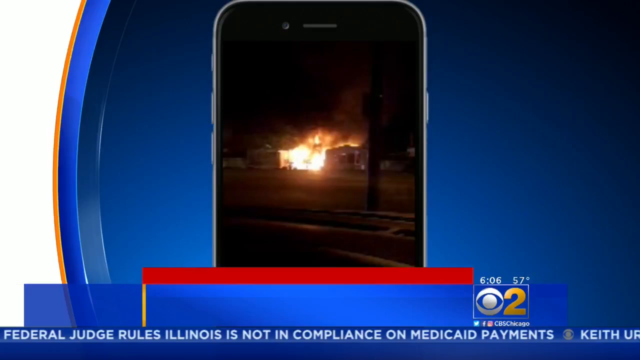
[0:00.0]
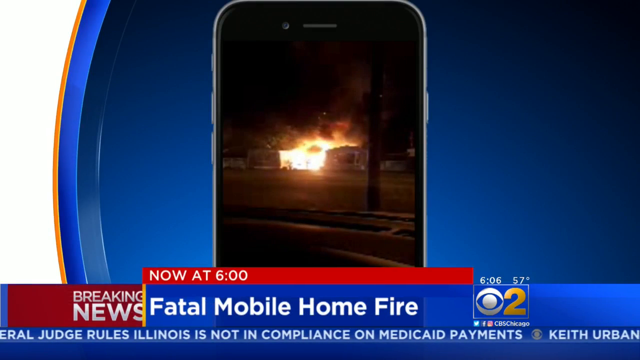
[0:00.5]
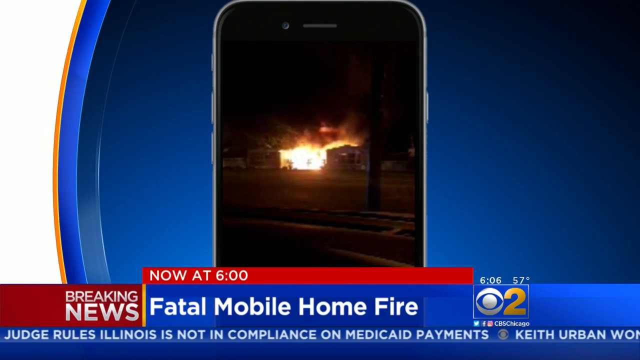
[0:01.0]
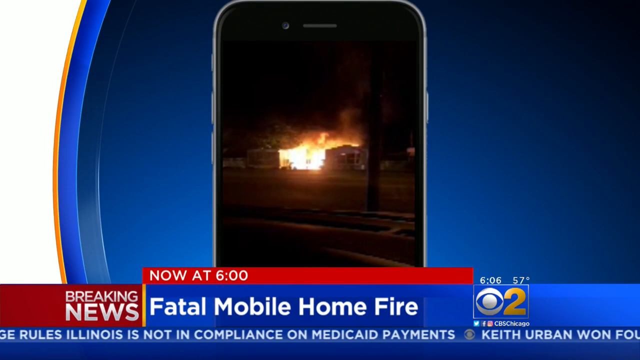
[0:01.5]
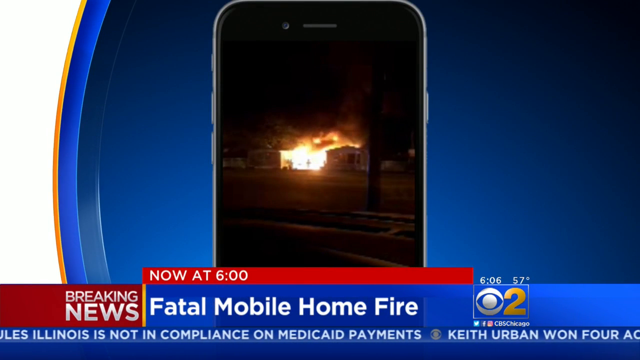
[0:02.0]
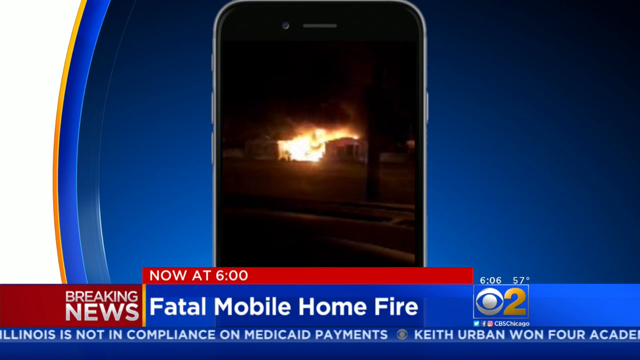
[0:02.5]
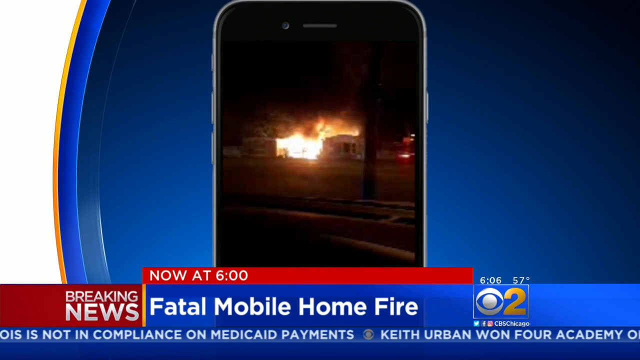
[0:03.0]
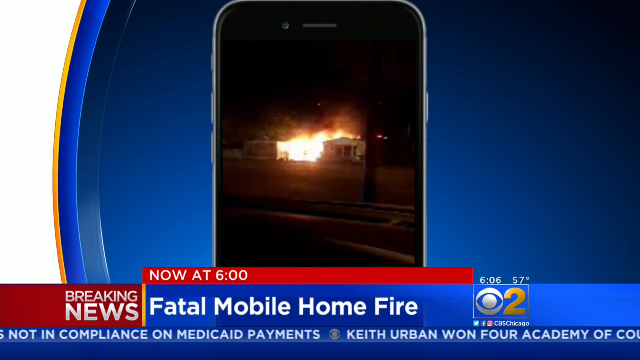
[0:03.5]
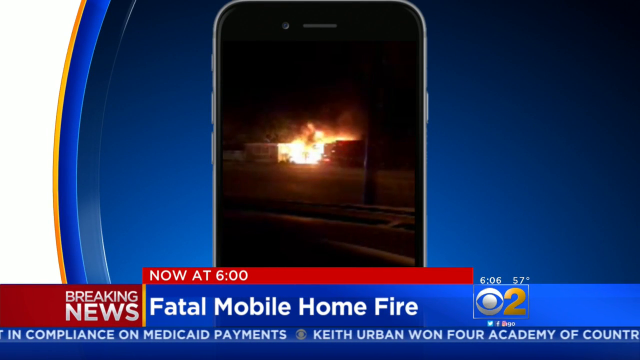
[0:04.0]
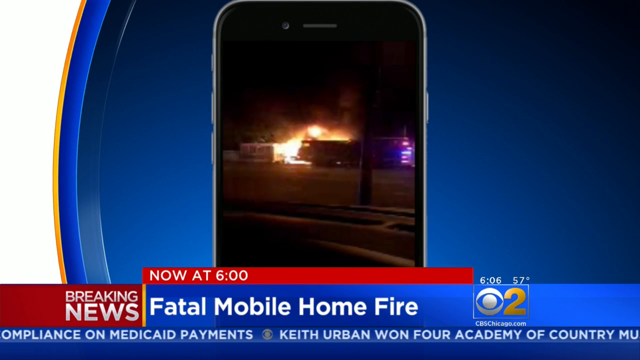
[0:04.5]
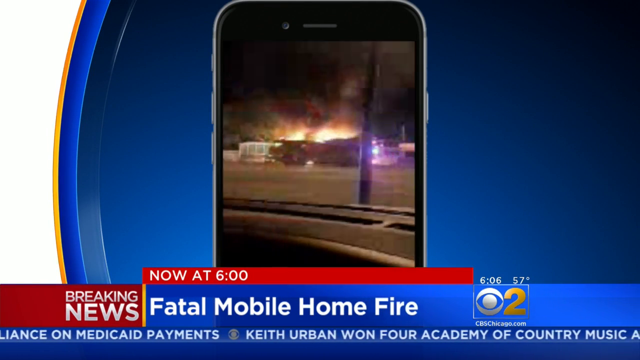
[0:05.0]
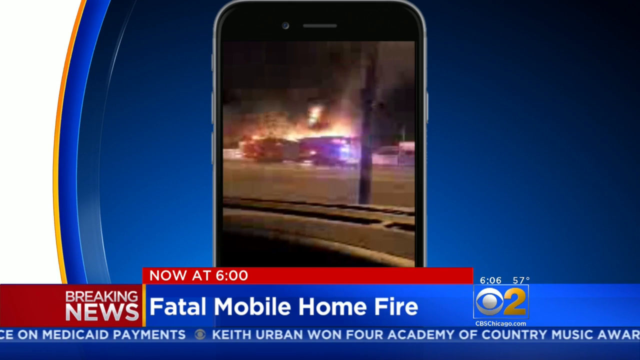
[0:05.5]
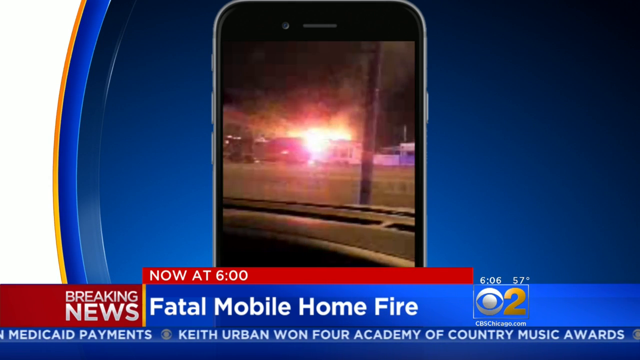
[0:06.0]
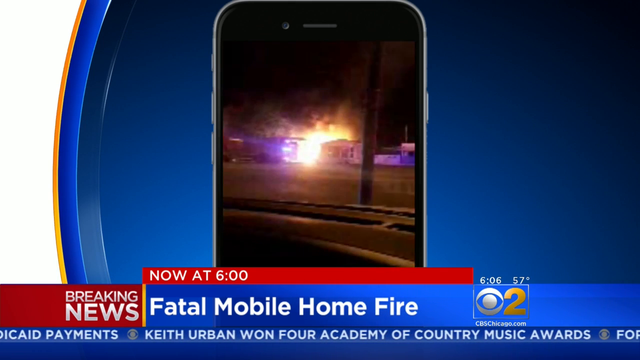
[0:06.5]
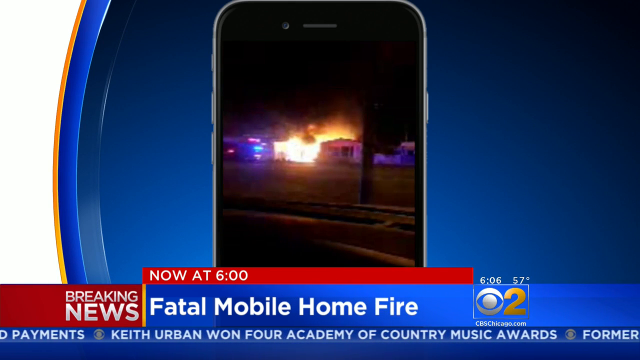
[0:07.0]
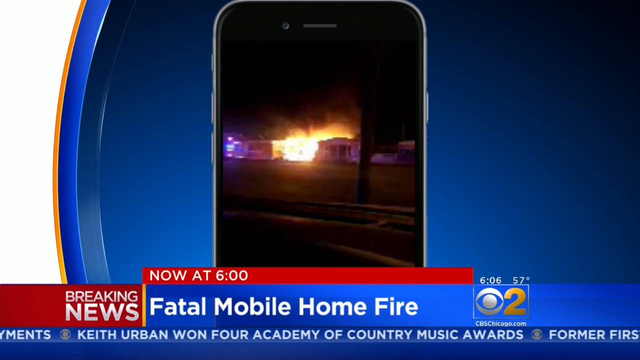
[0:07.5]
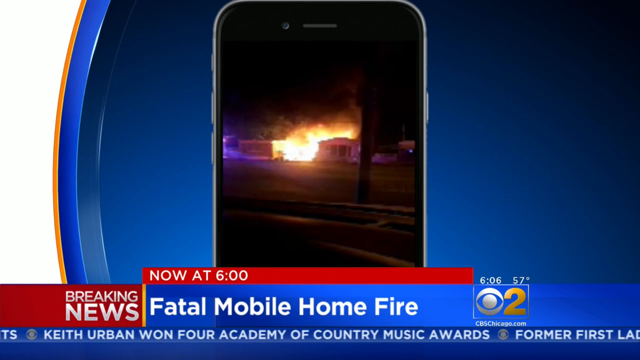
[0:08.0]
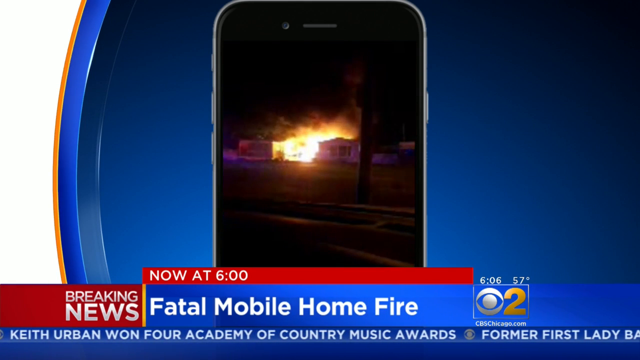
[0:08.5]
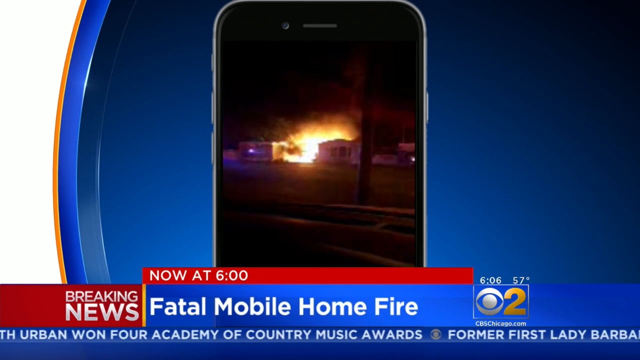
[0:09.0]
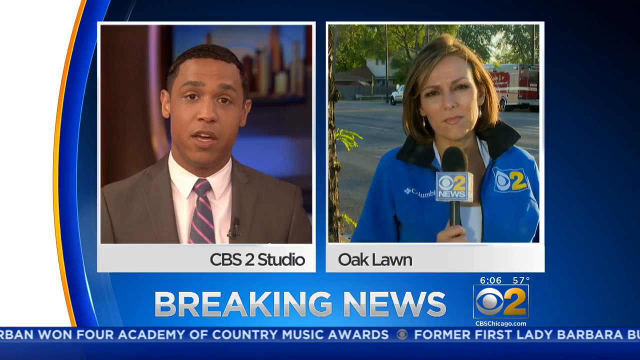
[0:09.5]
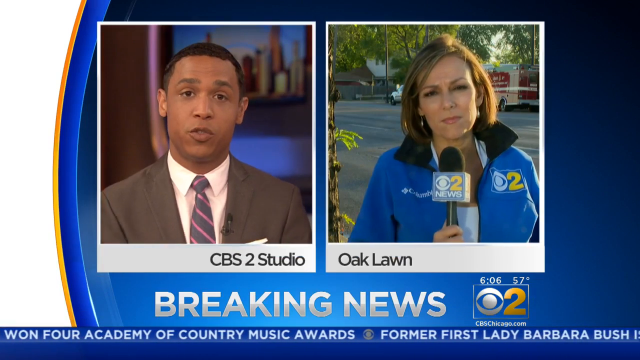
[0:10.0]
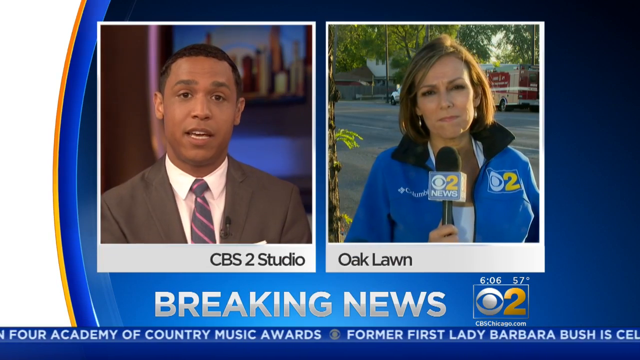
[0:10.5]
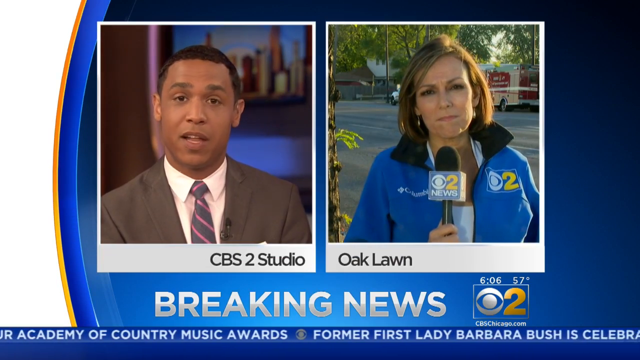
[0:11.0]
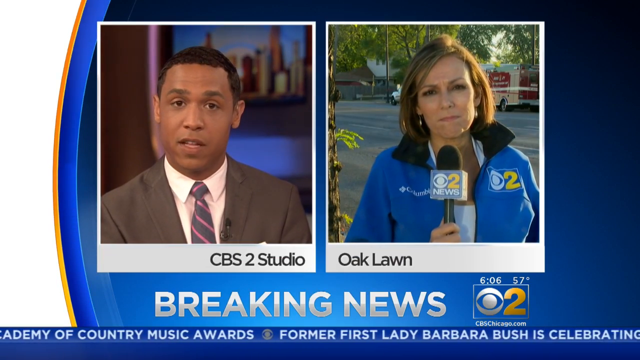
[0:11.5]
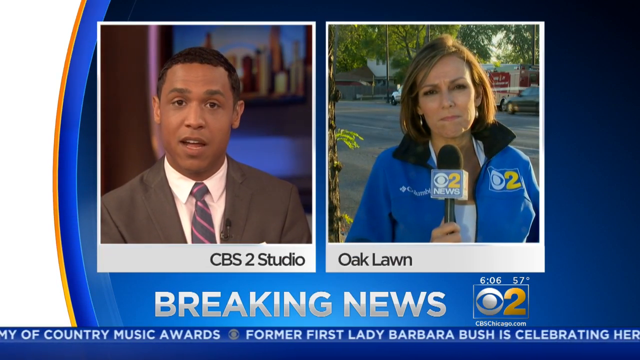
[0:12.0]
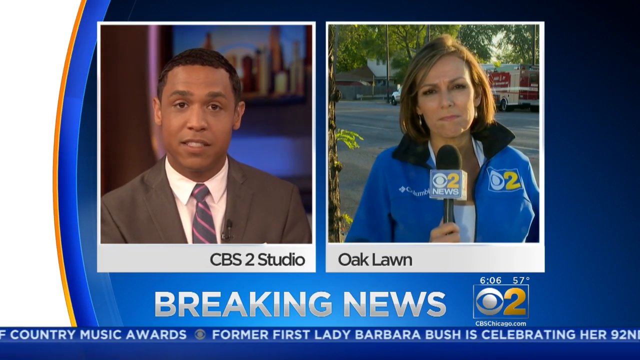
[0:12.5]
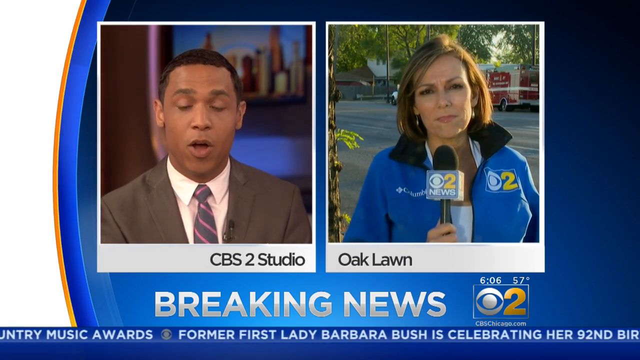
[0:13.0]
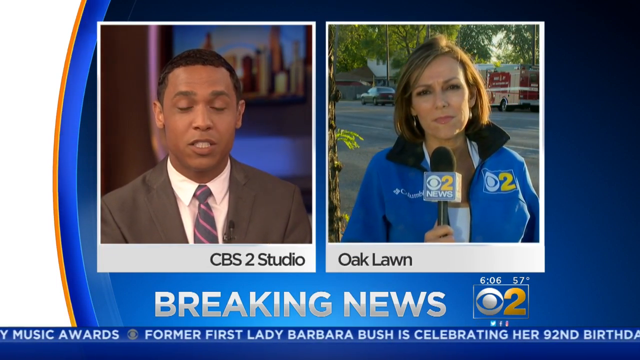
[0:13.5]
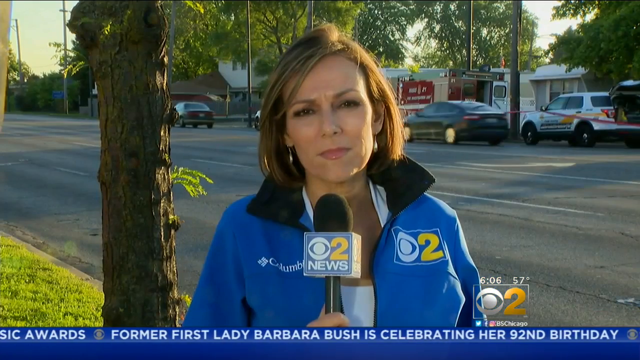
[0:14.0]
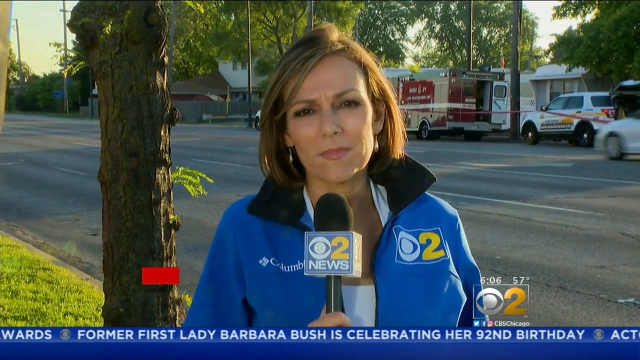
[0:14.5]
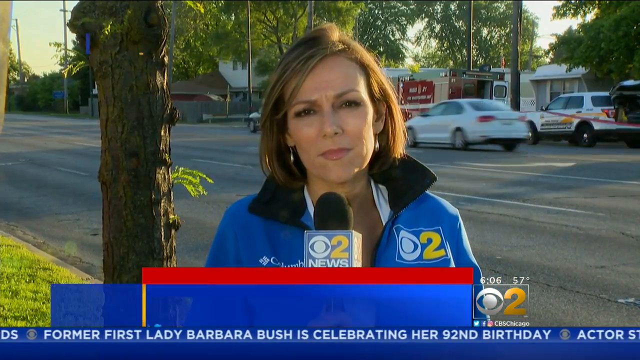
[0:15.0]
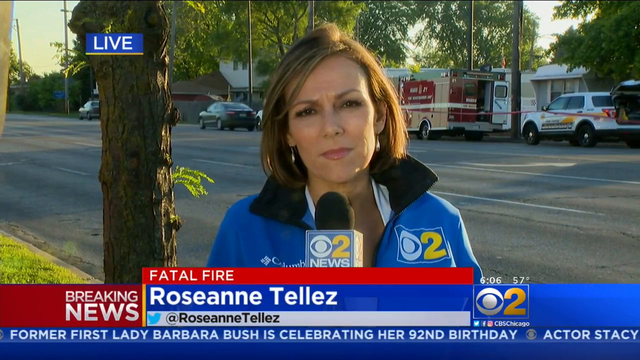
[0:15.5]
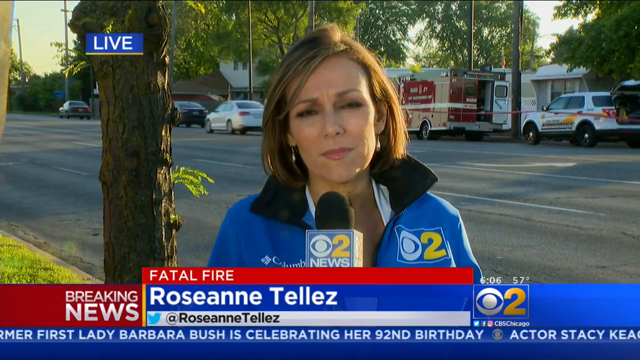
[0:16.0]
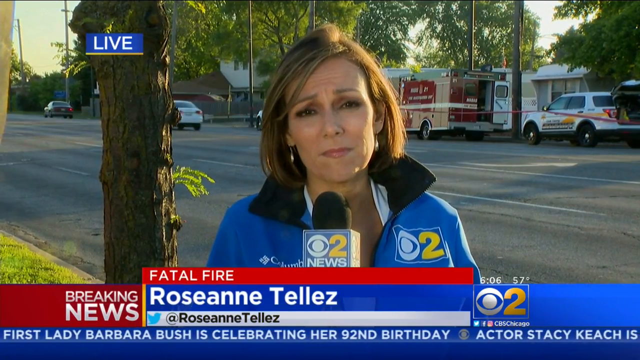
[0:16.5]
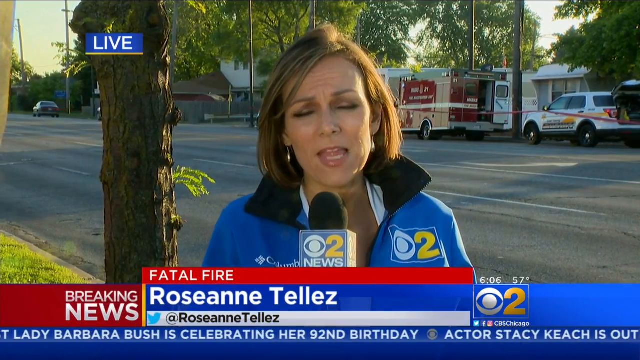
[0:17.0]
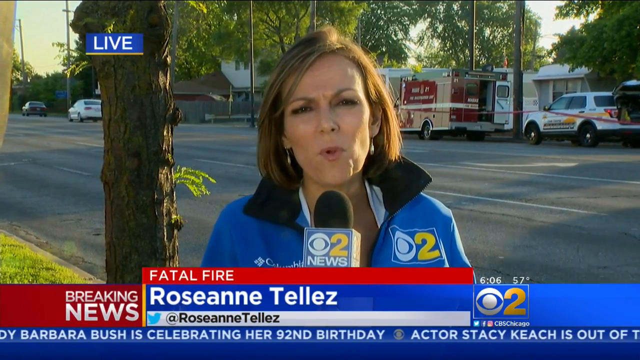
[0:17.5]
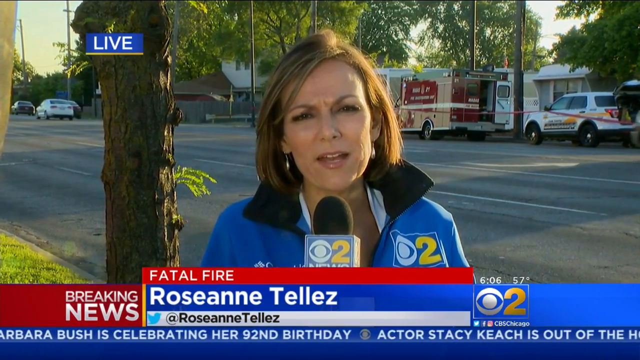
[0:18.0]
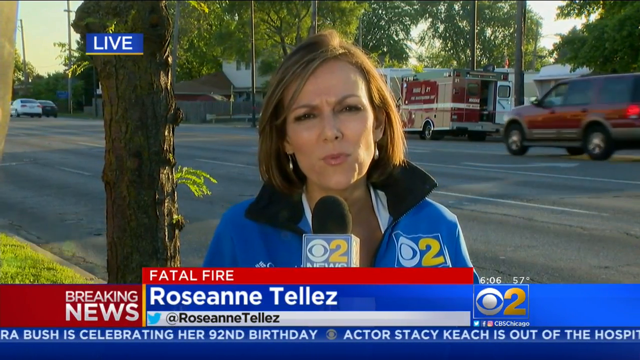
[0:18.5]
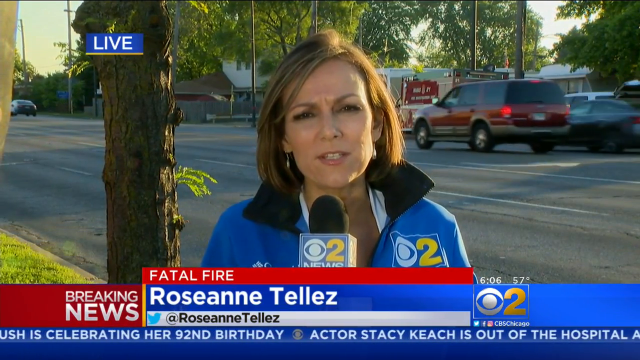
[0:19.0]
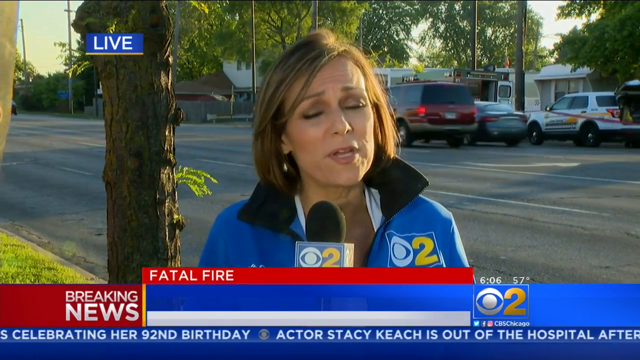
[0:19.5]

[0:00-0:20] A short video shows a fire truck moving from right to left, with a building surrounded by flames behind the vehicle. This footage appears inside a cell phone graphic set against a blue background; on the left there is a white border, along with other smaller orange, blue and light blue borders, with white borders and black writing at the bottom. In a picture on the left there is a man in elegant clothes, while on the right there is a woman wearing a jacket. The woman is then framed on the whole screen, occupying the central part of the frame. She has short, dark hair and wears a pair of earrings. Behind her, several vehicles move along a fairly wide road, and on the left behind her is the trunk of a tree extending from the bottom of the frame to the top. At the bottom there are some colored graphics with writing inside.